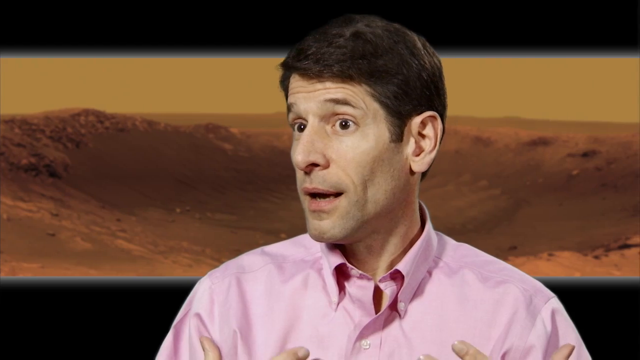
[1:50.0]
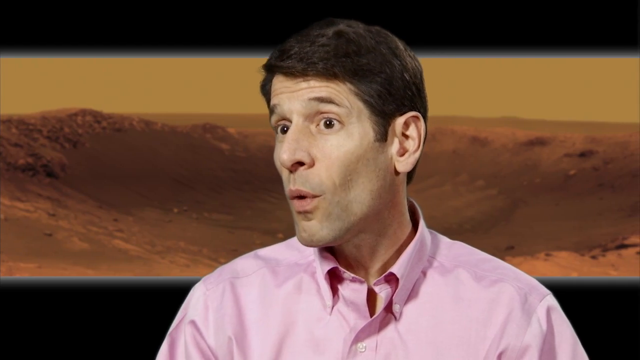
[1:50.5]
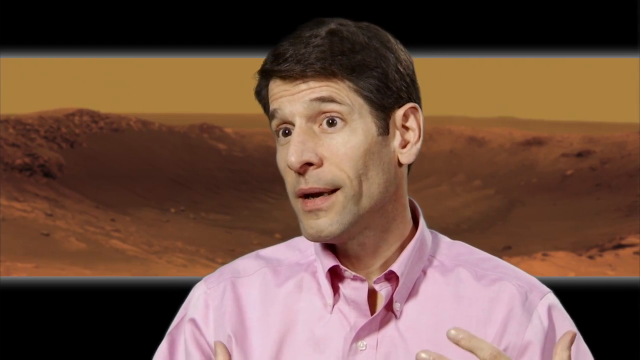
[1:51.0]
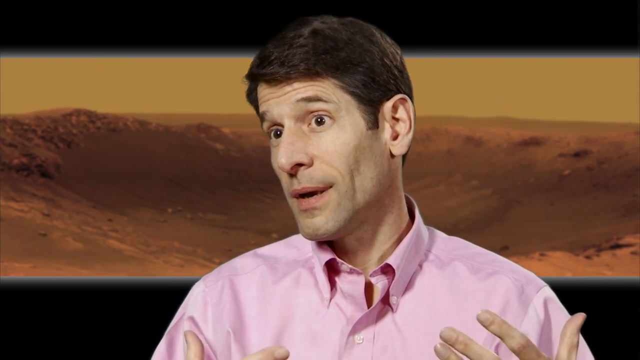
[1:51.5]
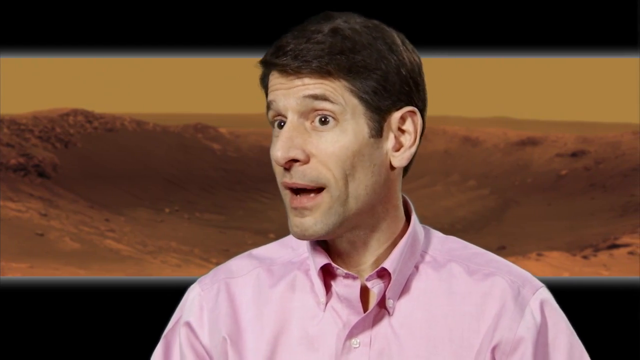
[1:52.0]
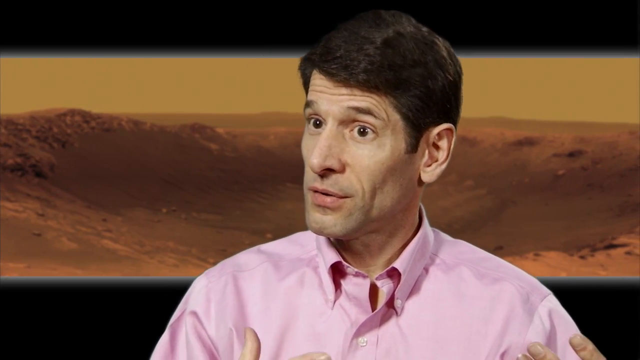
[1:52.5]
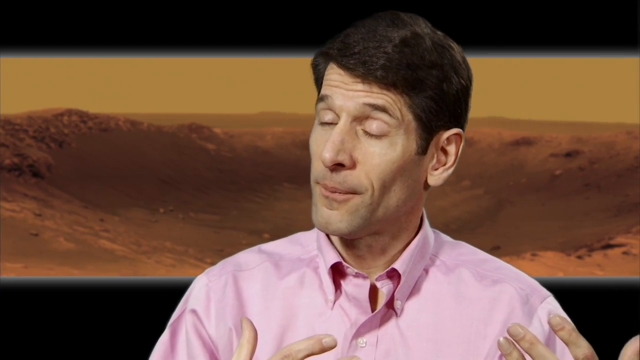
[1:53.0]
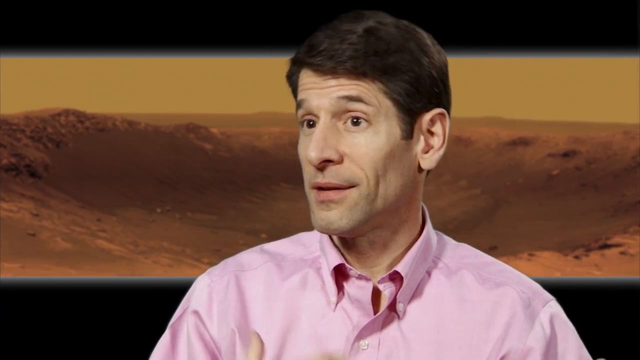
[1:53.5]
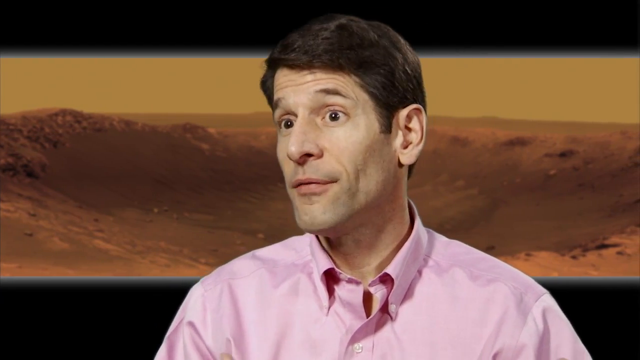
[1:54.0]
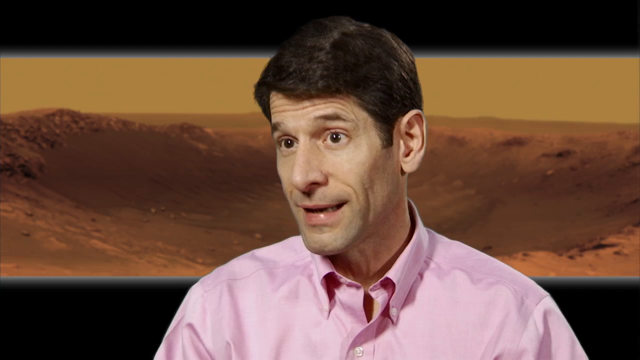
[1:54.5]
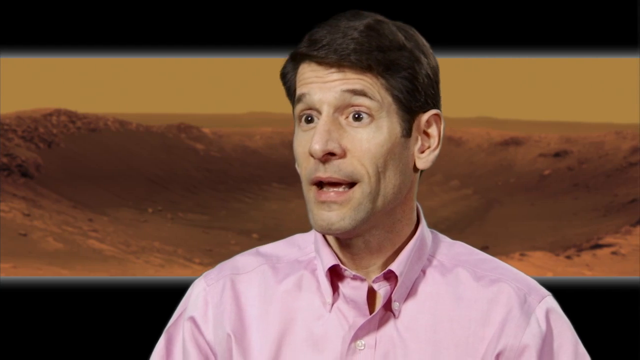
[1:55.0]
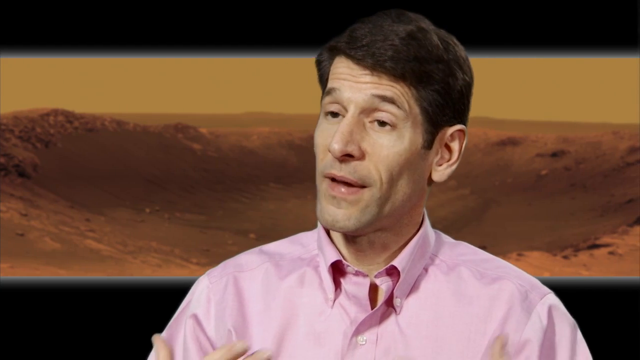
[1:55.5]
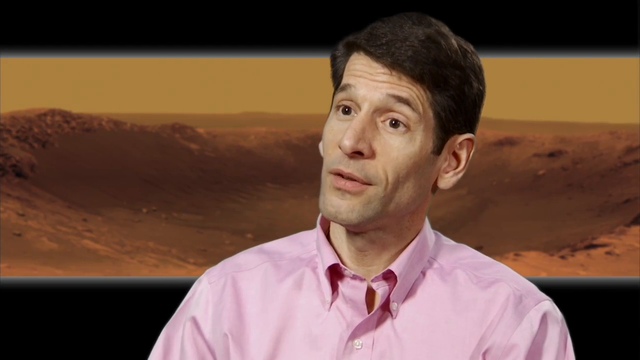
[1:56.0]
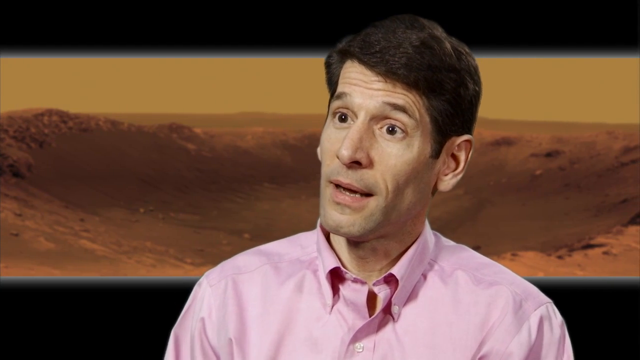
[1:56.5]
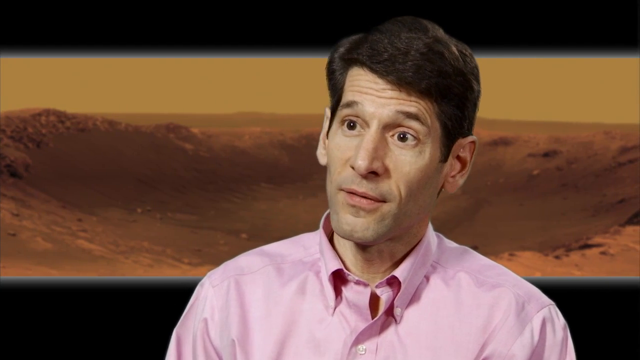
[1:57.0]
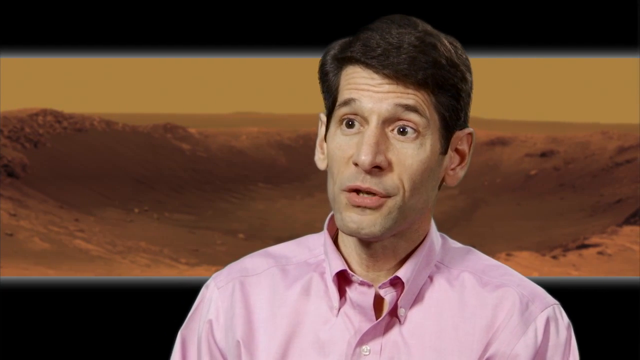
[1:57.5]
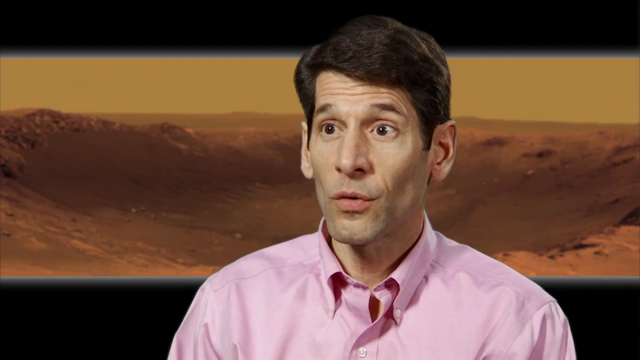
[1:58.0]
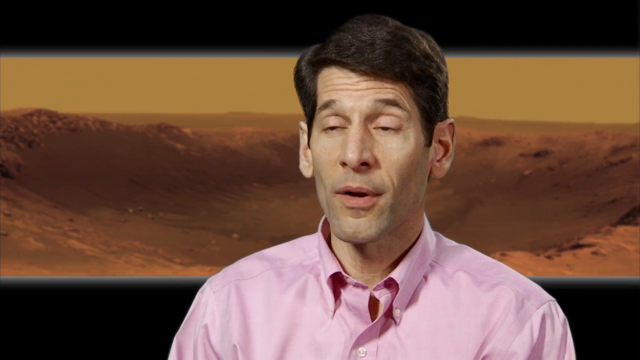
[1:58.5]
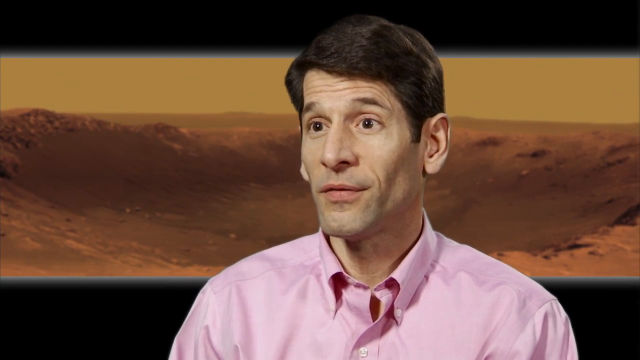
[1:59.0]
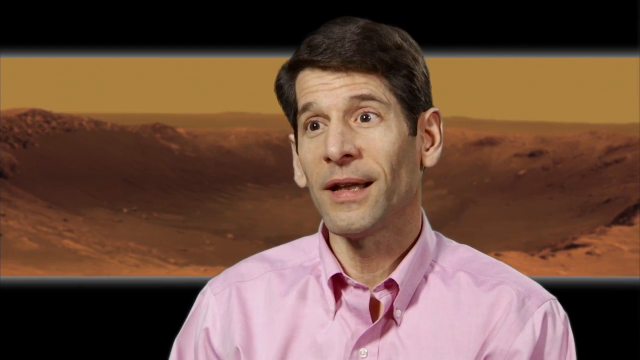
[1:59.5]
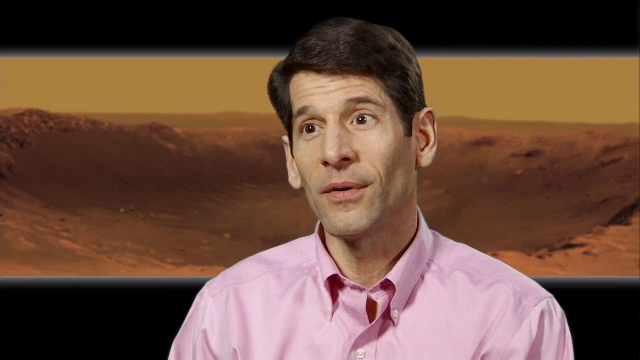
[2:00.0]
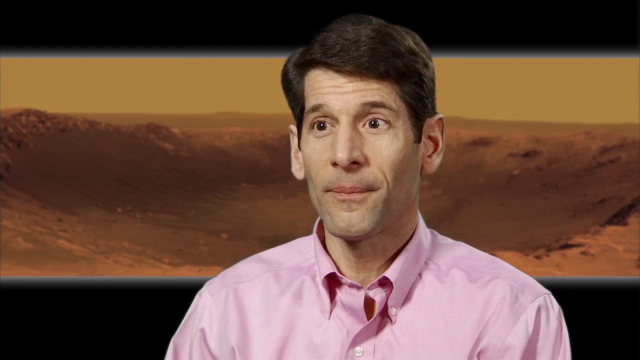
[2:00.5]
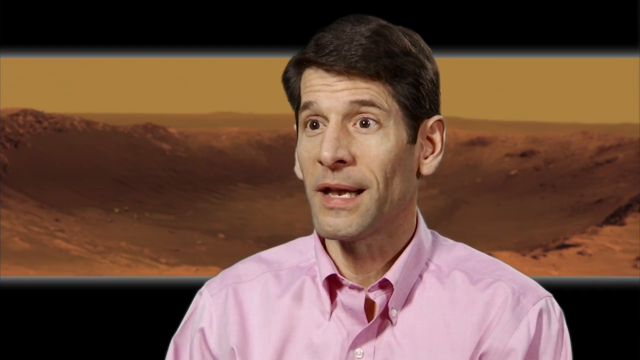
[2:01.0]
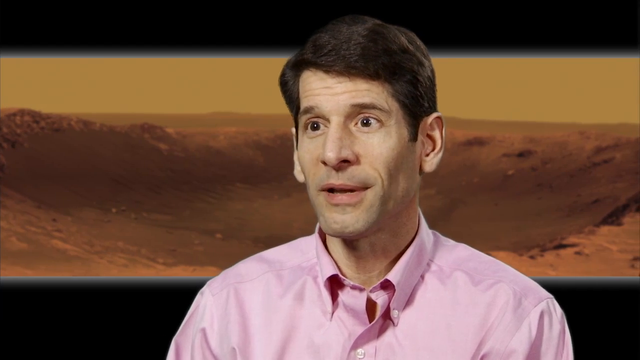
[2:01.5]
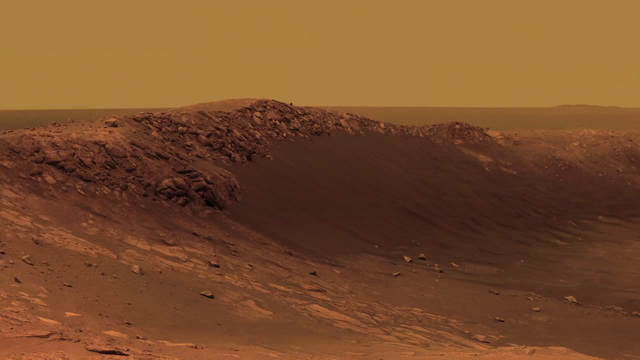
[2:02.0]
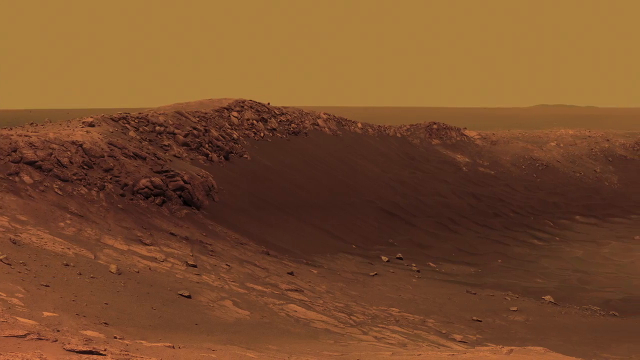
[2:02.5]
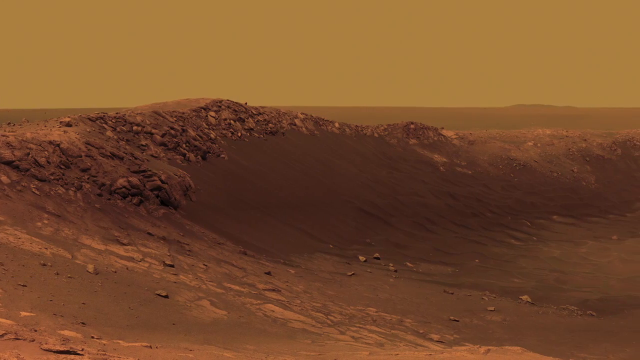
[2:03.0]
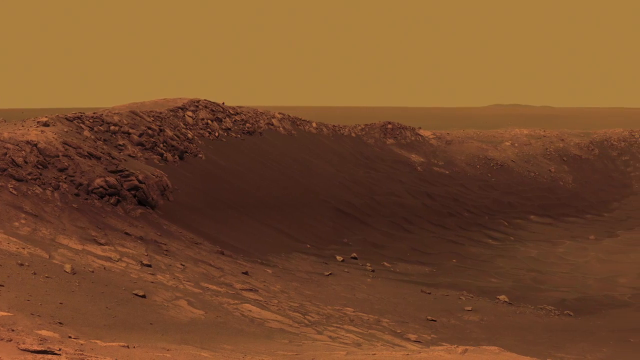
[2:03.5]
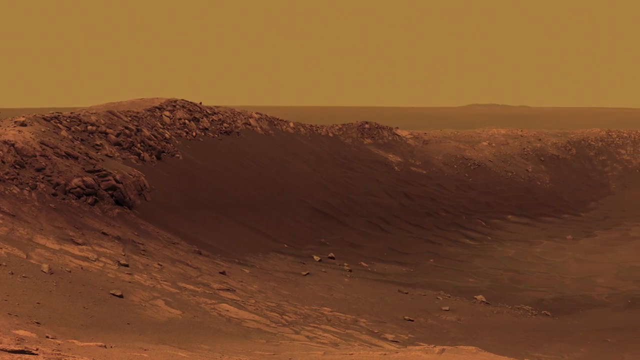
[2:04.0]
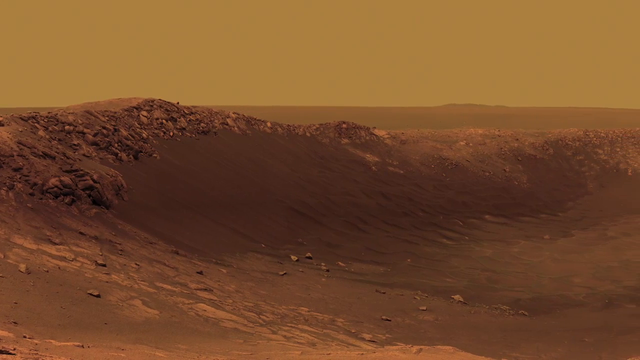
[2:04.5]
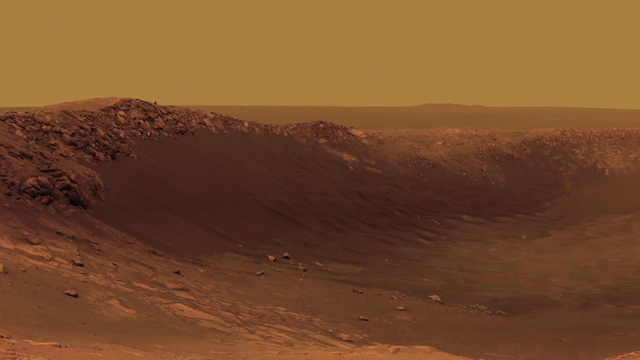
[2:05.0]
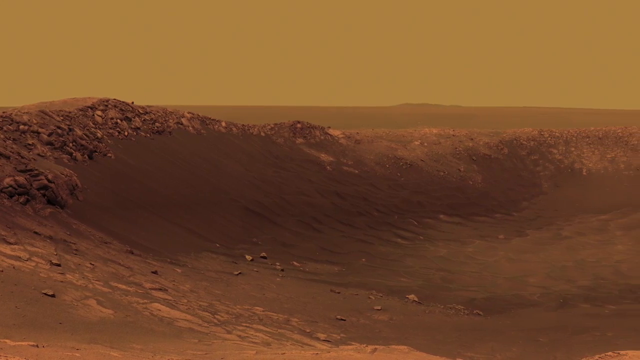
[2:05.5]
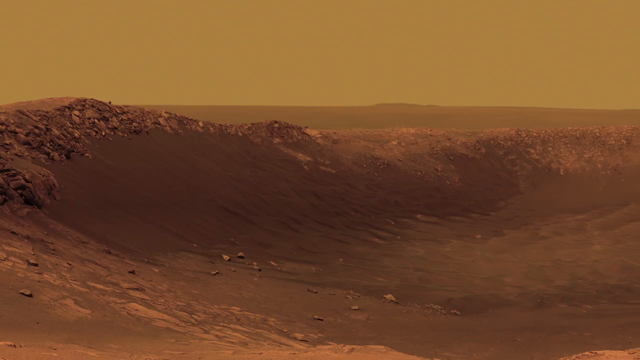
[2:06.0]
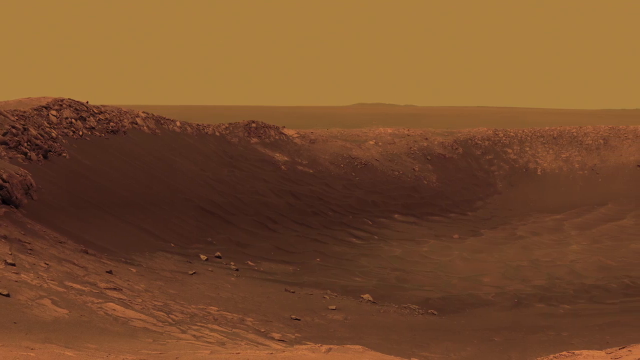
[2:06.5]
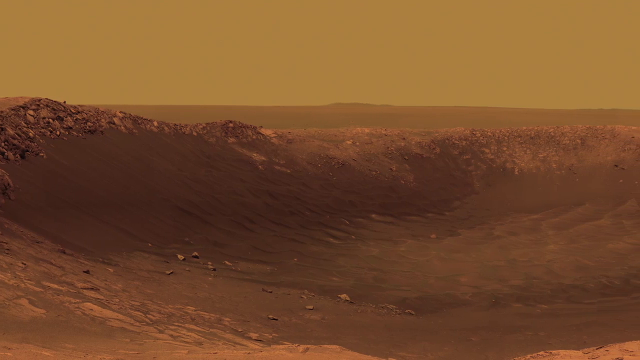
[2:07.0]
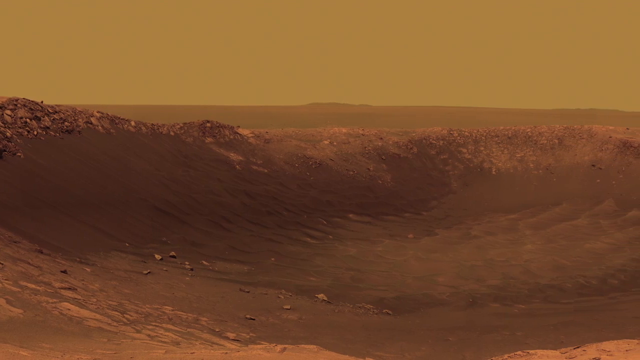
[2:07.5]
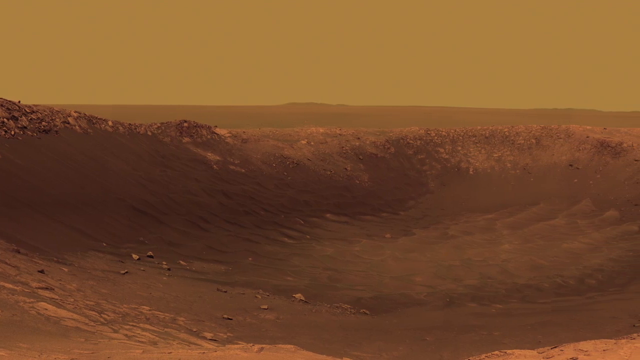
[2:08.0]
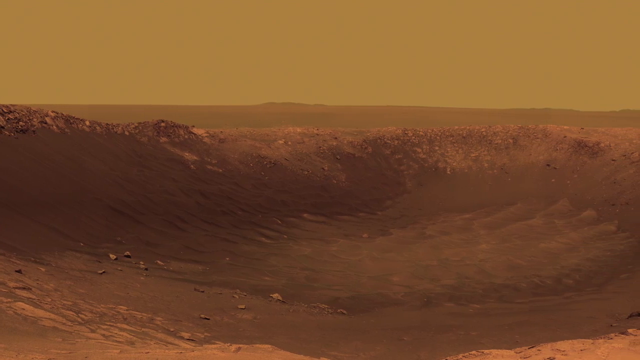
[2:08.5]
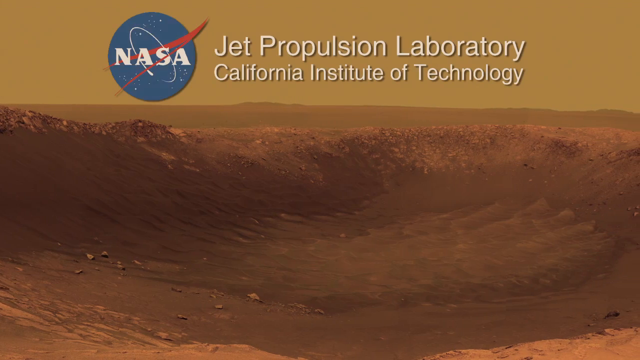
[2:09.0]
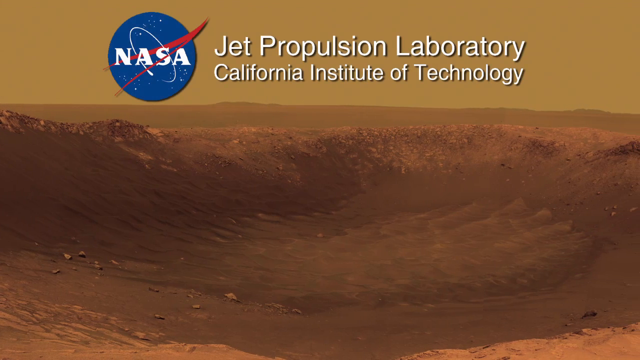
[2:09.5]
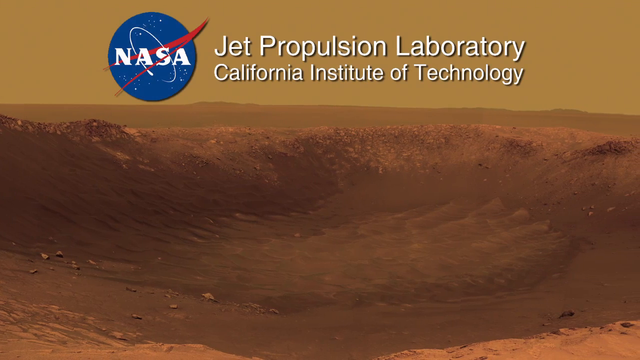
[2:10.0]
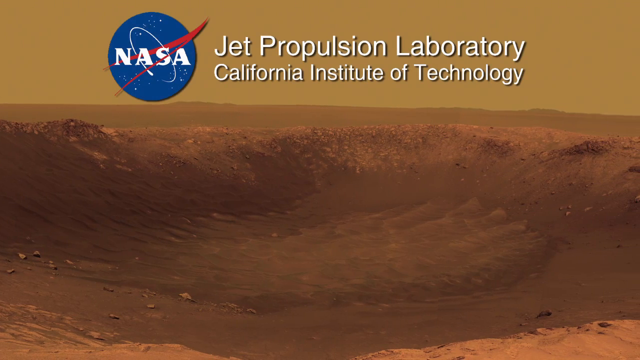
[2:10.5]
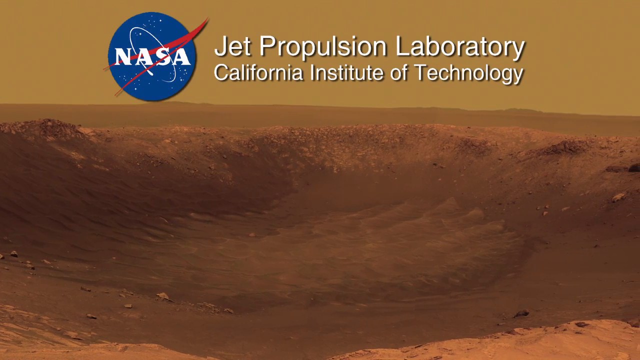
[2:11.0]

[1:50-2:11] A white man with brown hair and a pink collared shirt speaks, looking not directly at the camera but towards the left of it. A crater is in the background behind him. His head moves slightly left and right as he talks, and he nods slightly up and down. The picture of the crater in the background moves very slowly towards the right. The man then fades out, leaving a photograph of the crater as the camera slowly pans towards the right, showing much of the crater area. White text appears at the top reading "Jet Propulsion Laboratory, California Institute of Technology". To the left of it is the NASA logo: a blue circle with white NASA letters inside and red and white lines going around and through the letters.